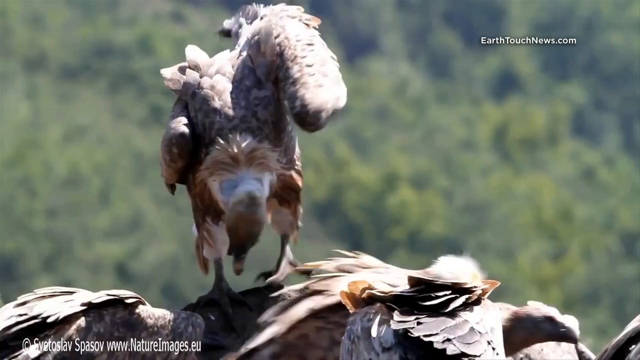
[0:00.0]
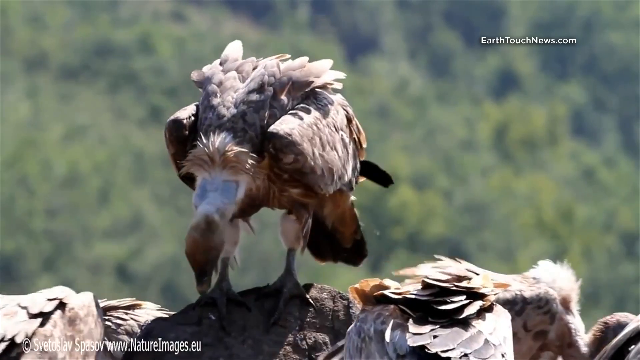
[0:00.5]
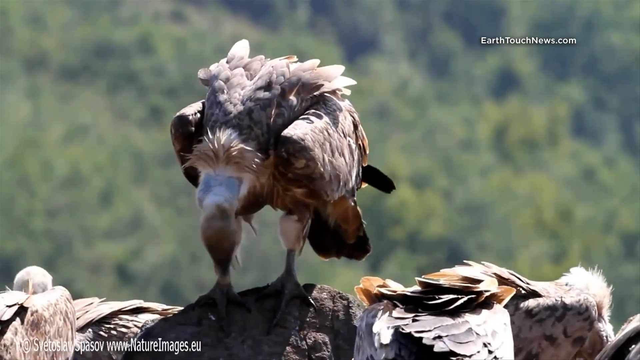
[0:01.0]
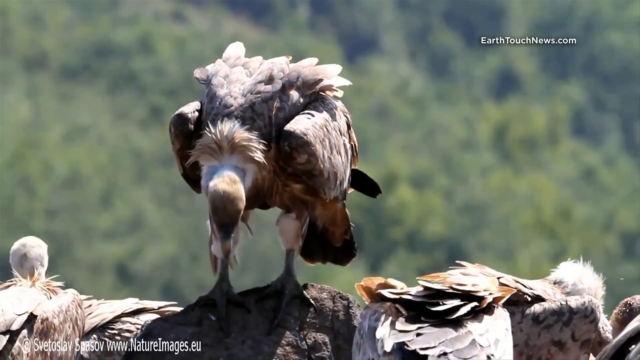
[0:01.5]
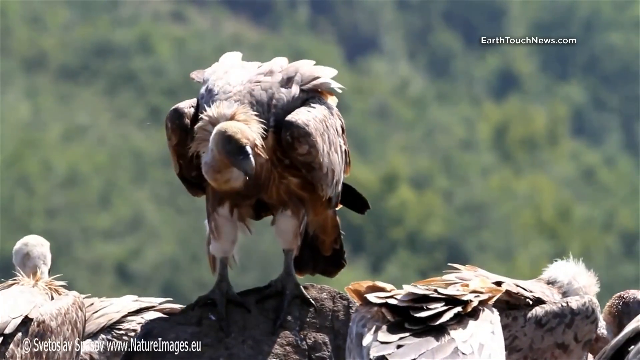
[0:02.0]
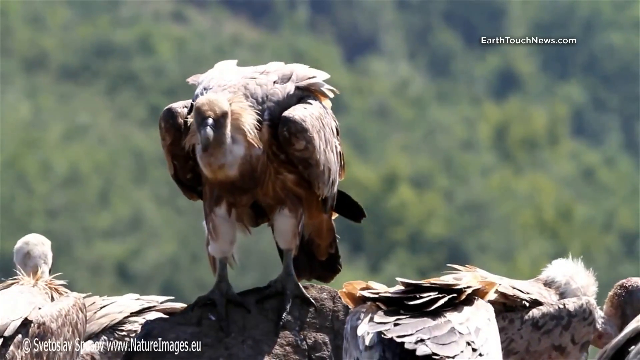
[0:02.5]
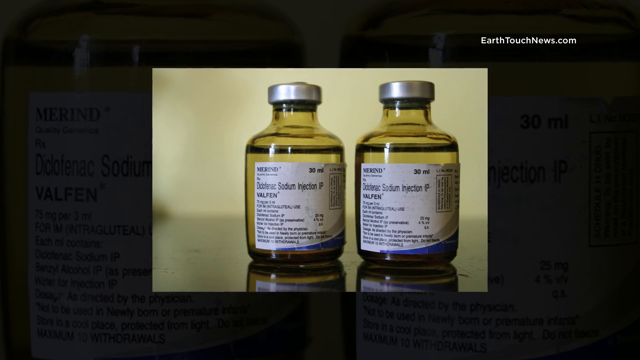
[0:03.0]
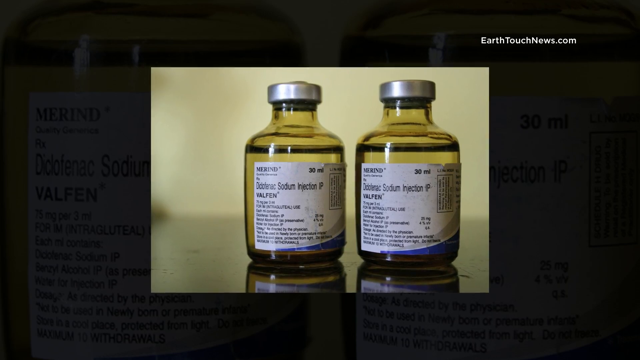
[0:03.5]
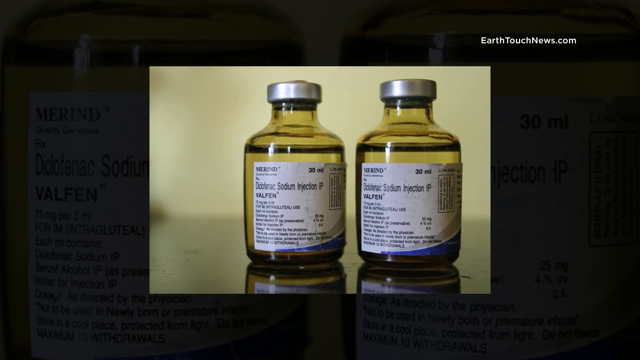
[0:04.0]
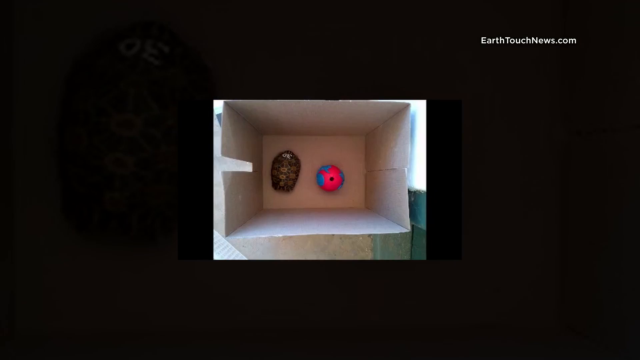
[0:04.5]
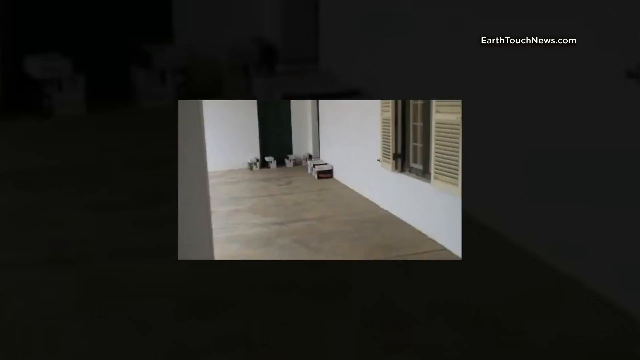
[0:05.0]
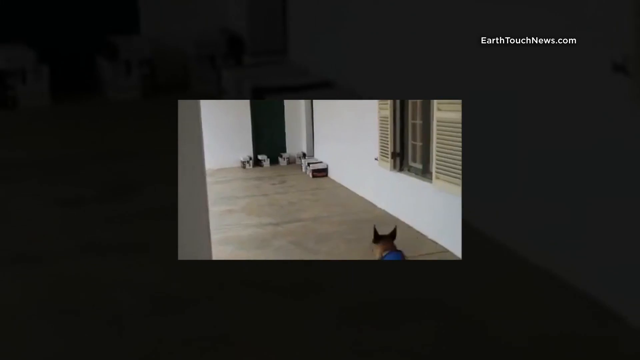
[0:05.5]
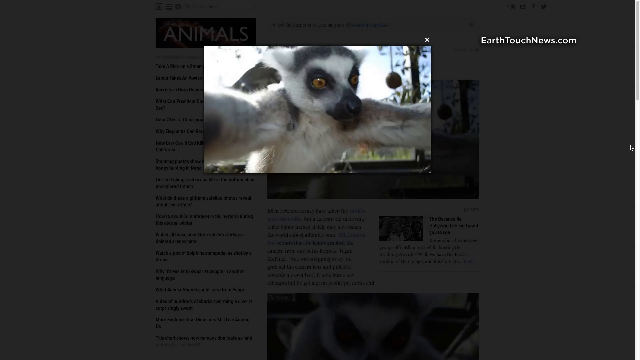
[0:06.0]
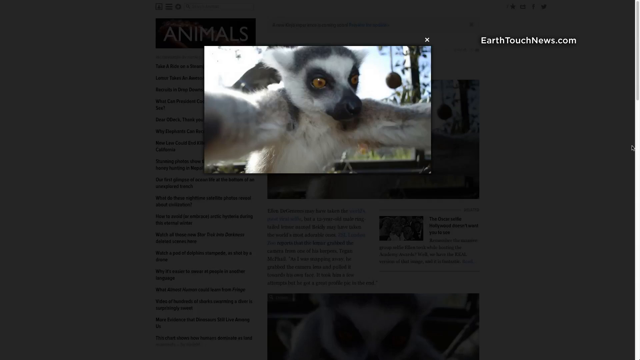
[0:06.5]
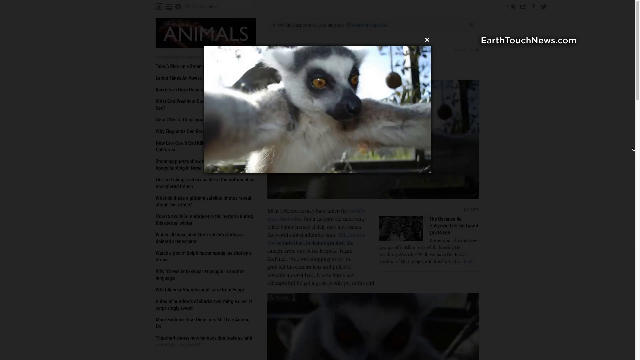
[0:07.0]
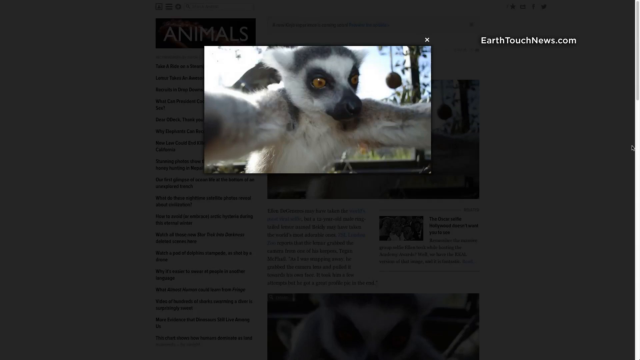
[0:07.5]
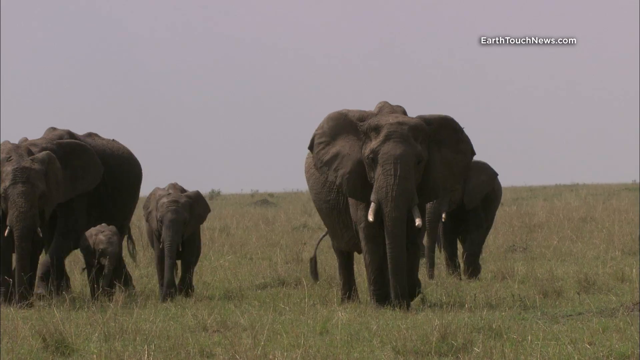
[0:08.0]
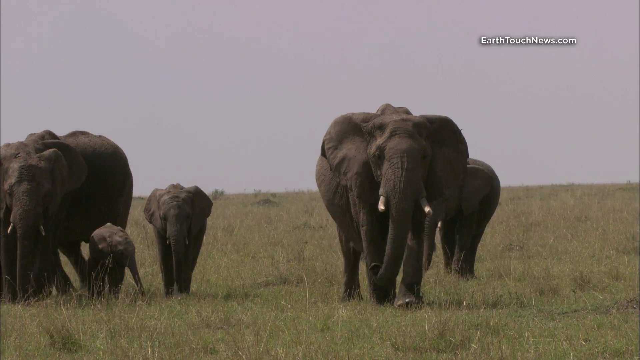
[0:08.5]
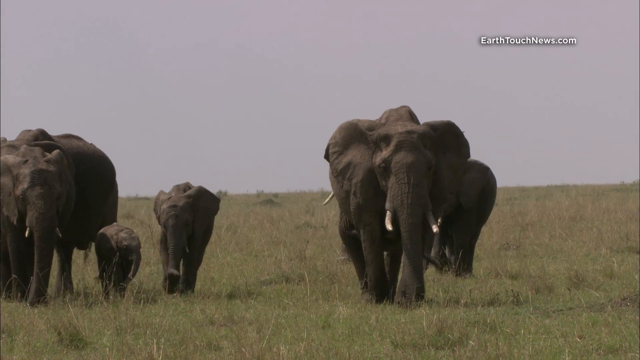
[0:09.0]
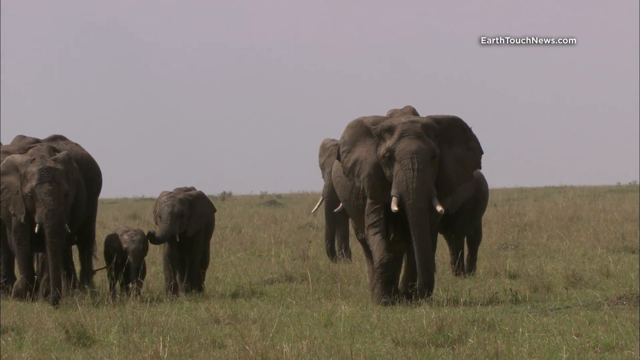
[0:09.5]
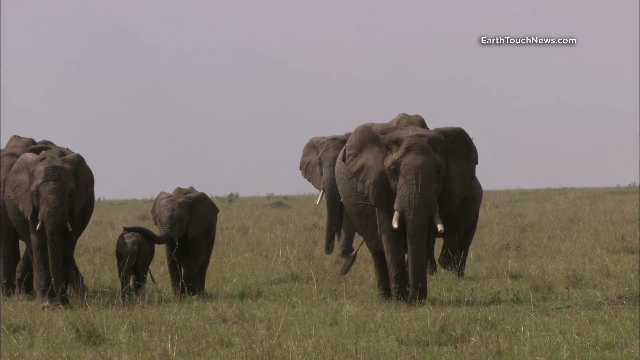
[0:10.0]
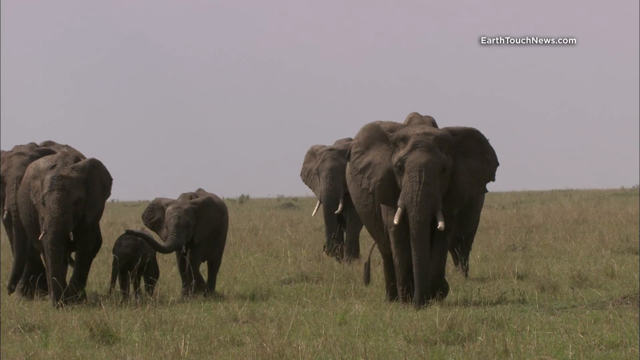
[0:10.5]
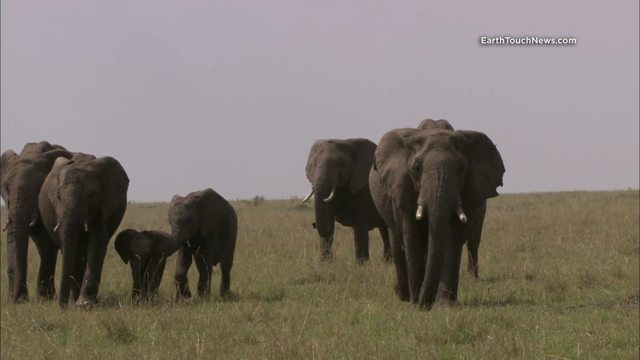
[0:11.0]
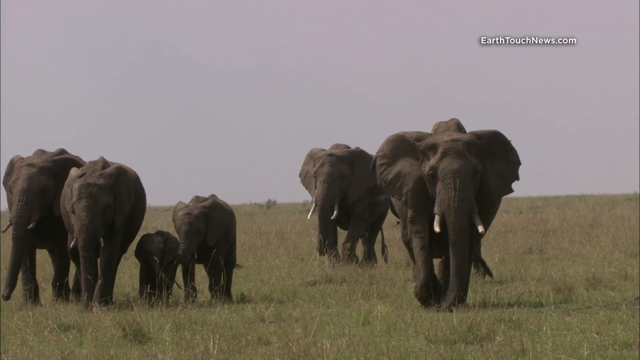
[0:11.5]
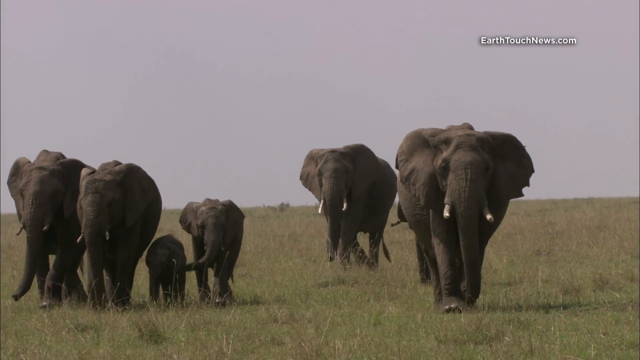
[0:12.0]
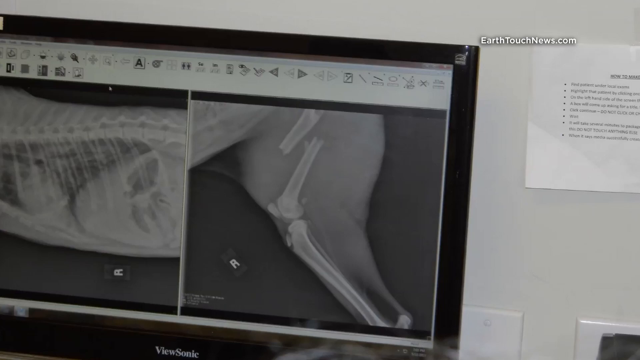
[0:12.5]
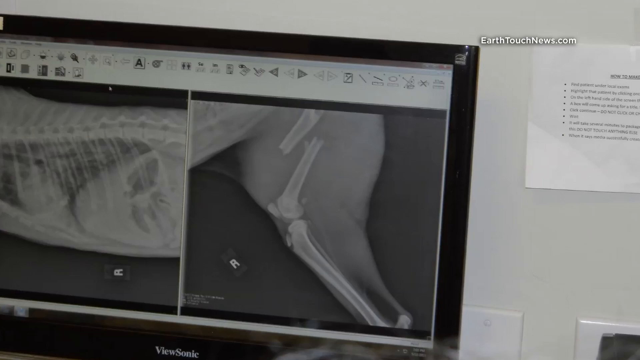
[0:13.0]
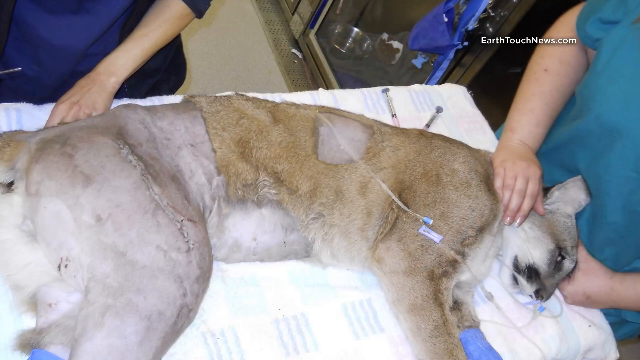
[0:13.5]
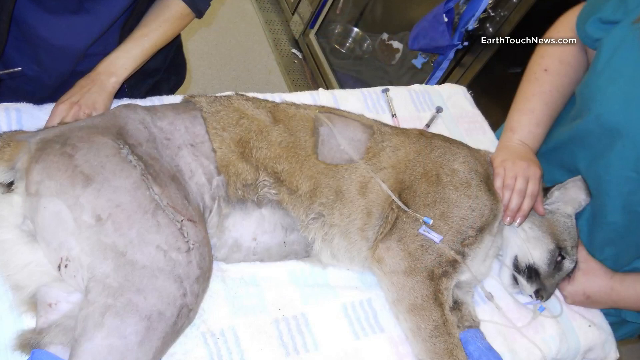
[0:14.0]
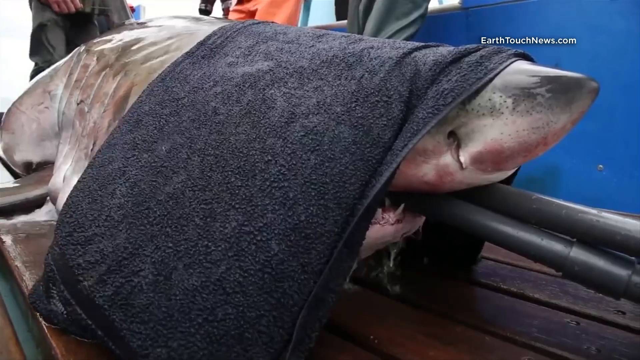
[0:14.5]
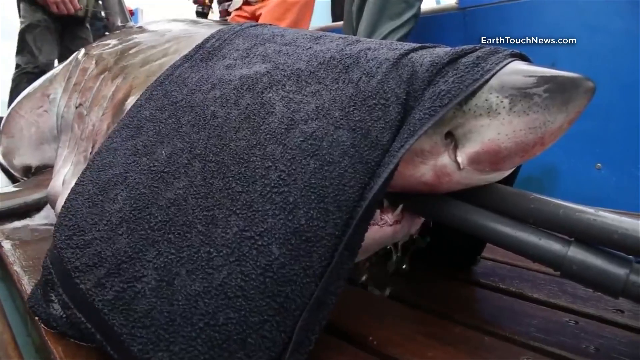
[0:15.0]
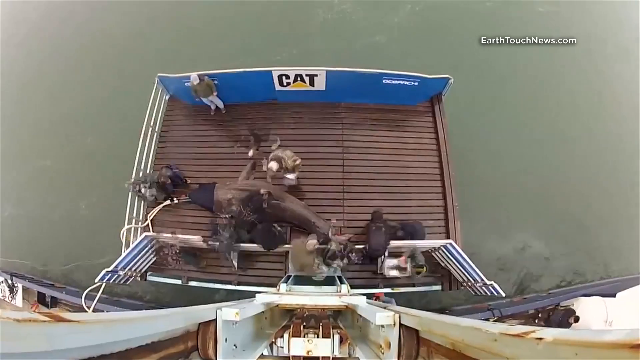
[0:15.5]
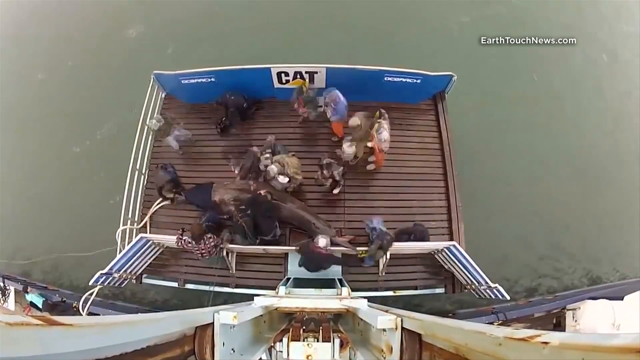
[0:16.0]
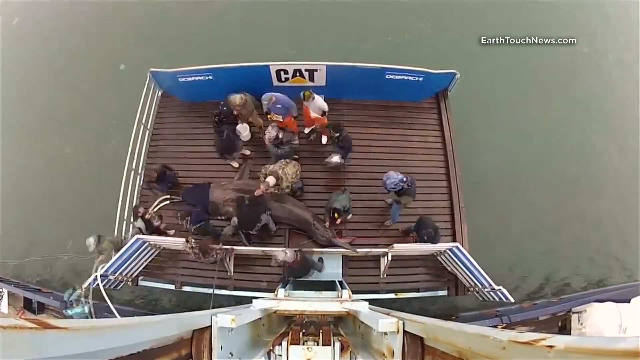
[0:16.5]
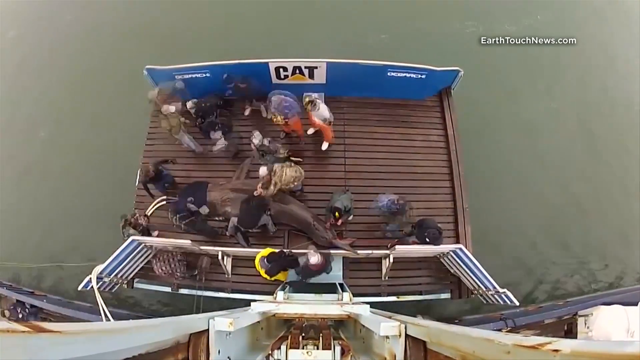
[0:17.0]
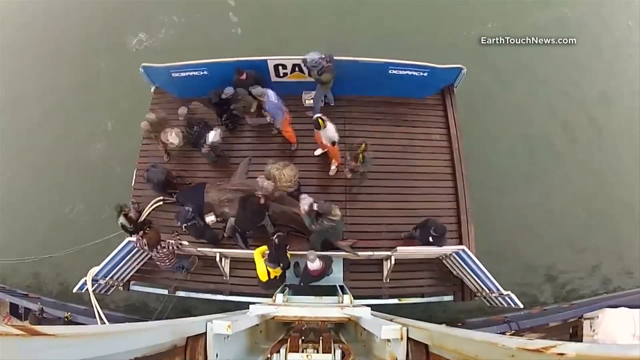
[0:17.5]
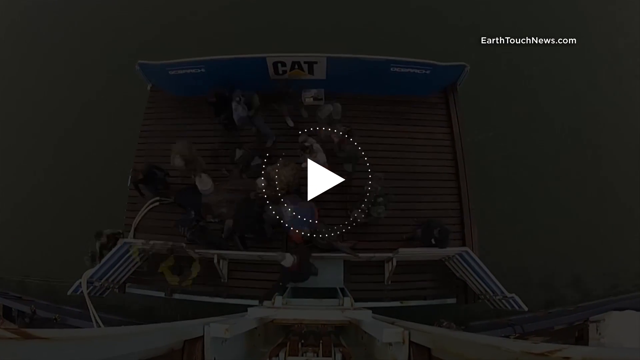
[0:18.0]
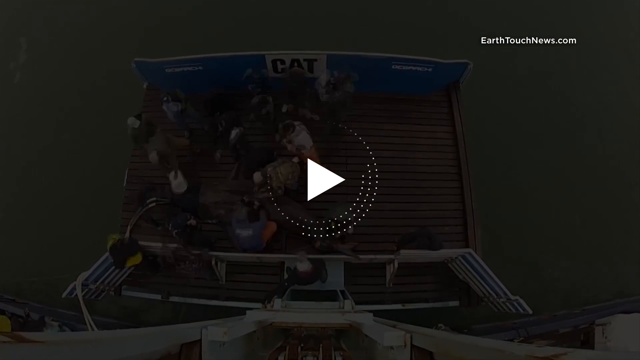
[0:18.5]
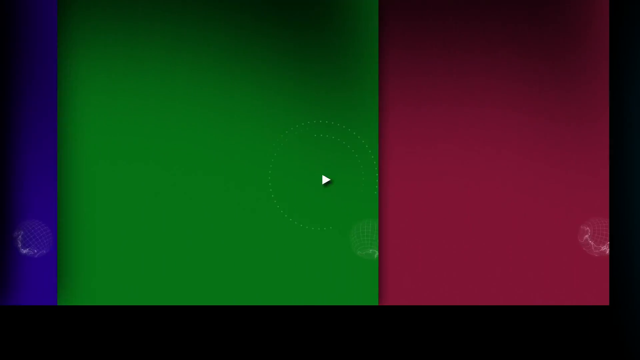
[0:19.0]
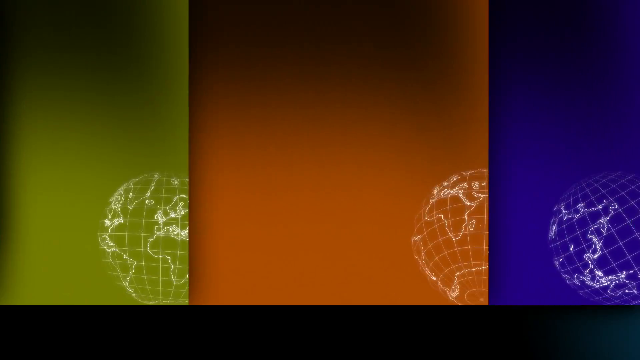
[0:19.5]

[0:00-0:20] An image shows what appears to be a buzzard with a group of other buzzards. Next comes an image of a product, a sodium injection, with two bottles beside each other. A series of images follows: an exterior with shutters and white walls; a dog briefly running; a lemur by itself against a gray background; and elephants of various sizes walking towards the camera in a kind of slow-motion style. A screen then appears to show an animal with a broken bone, as it looks like an X-ray. Next, a dog is shown with two people who appear to be vets on either side of it. An image shows a shark with a towel over its head. A time-lapse follows of a group of people outside on a dock, all working together. Finally, a screen shows different countries, each in a different color.